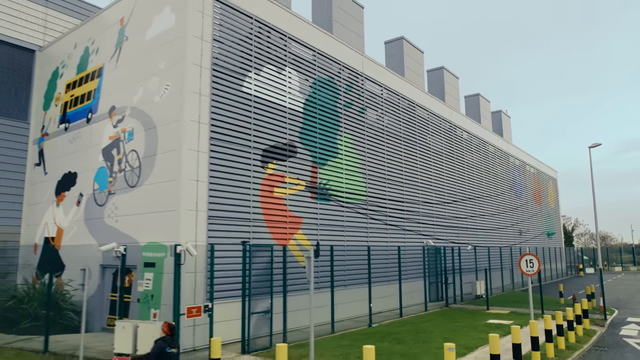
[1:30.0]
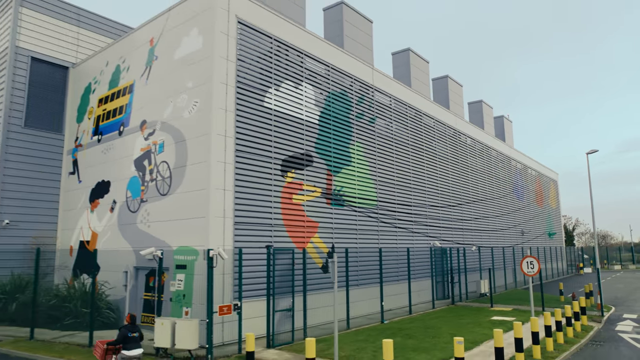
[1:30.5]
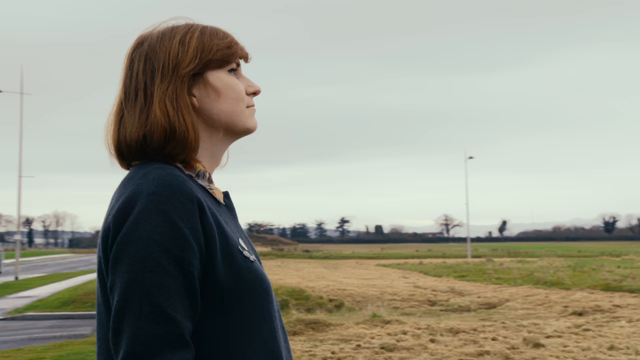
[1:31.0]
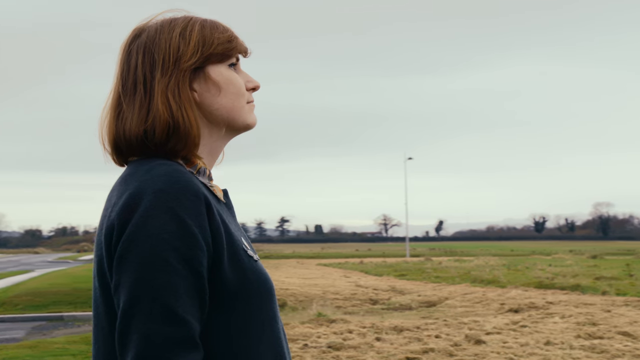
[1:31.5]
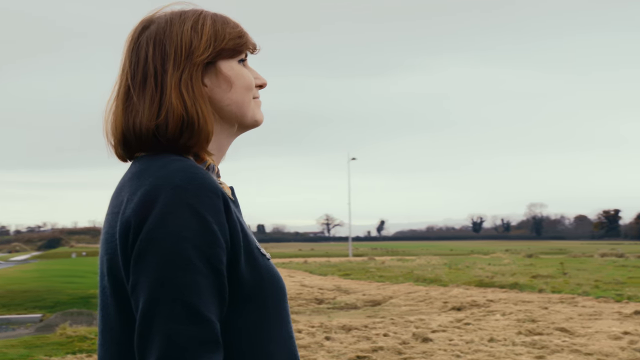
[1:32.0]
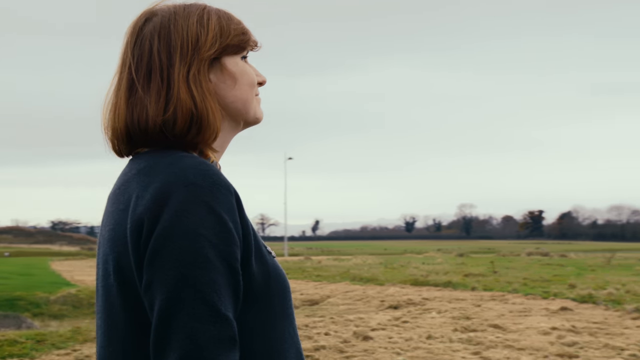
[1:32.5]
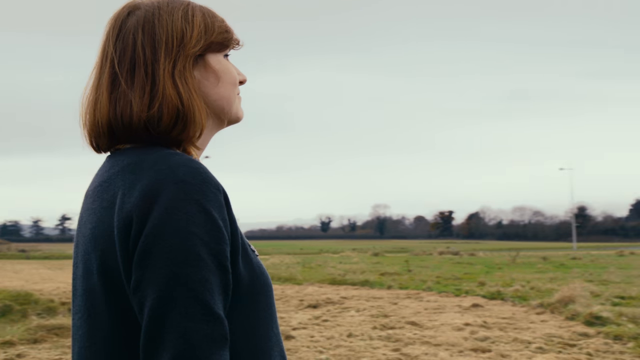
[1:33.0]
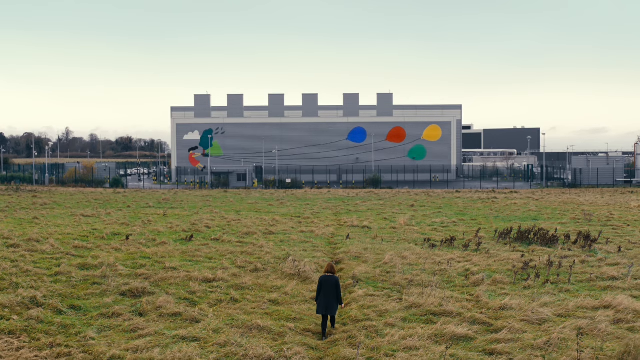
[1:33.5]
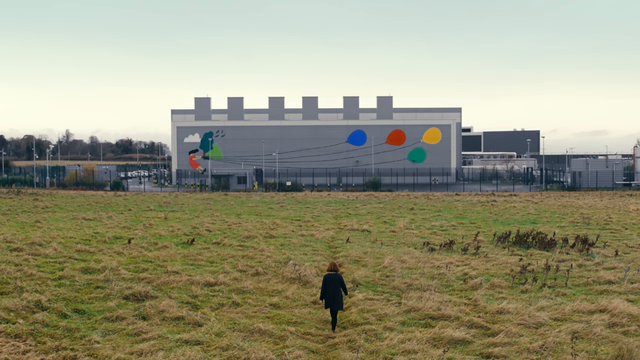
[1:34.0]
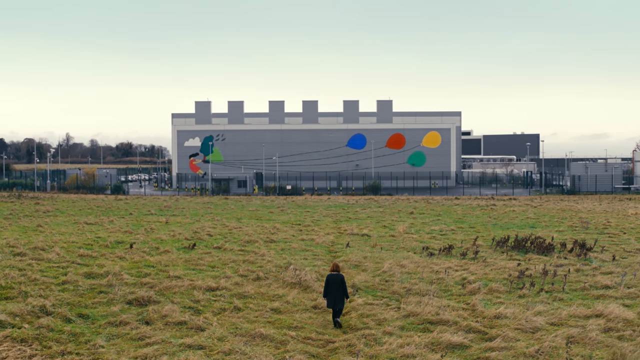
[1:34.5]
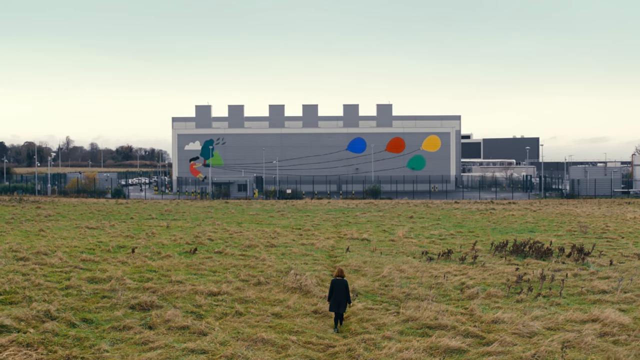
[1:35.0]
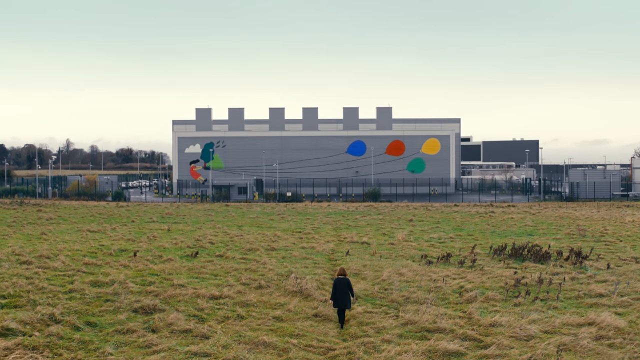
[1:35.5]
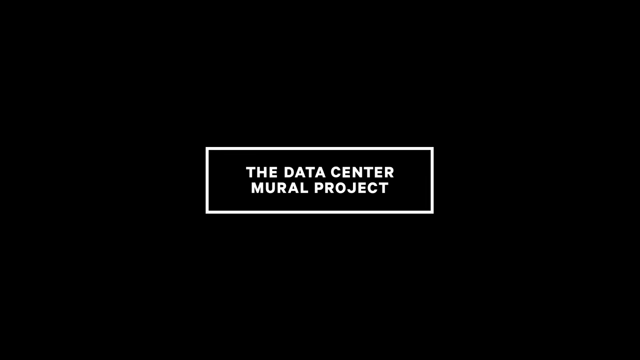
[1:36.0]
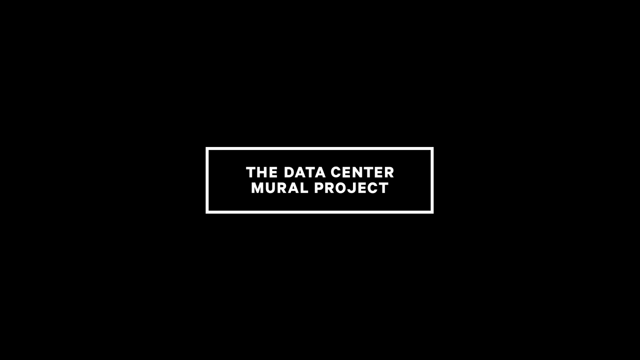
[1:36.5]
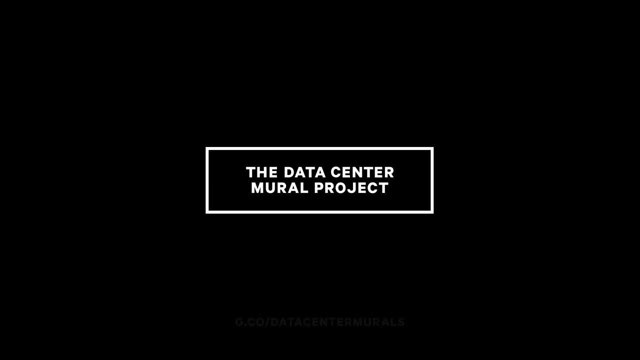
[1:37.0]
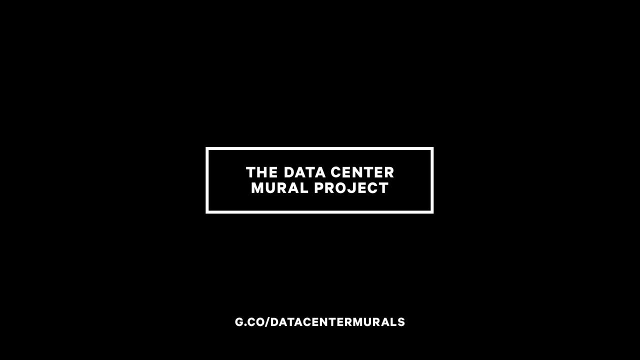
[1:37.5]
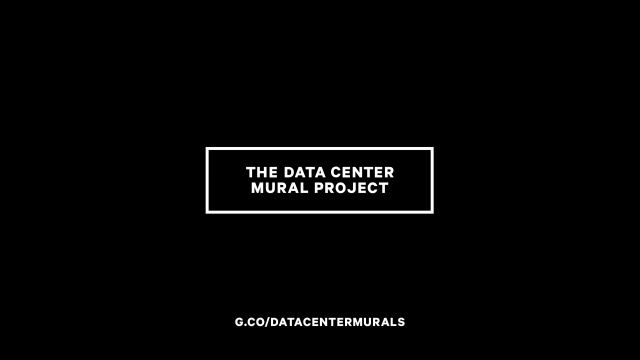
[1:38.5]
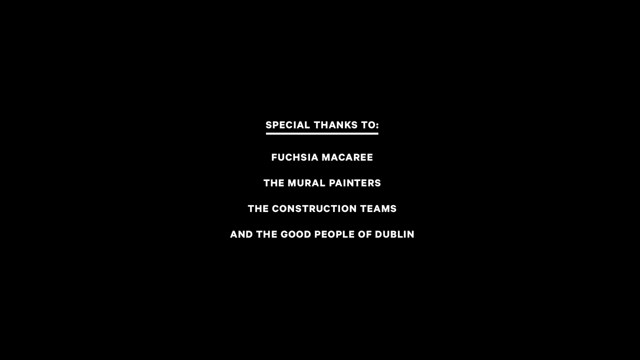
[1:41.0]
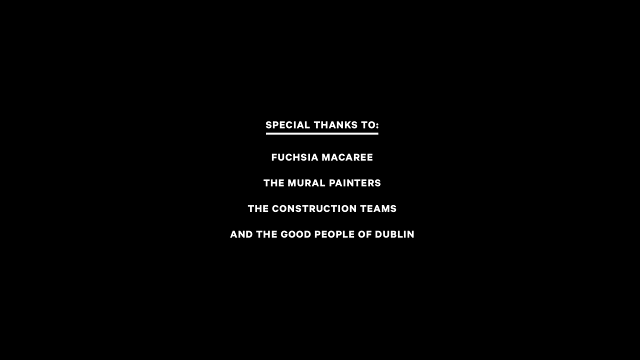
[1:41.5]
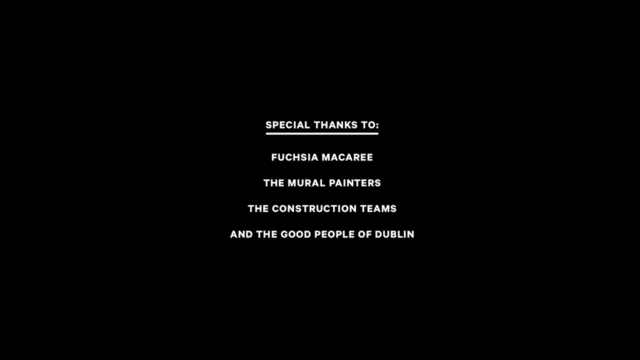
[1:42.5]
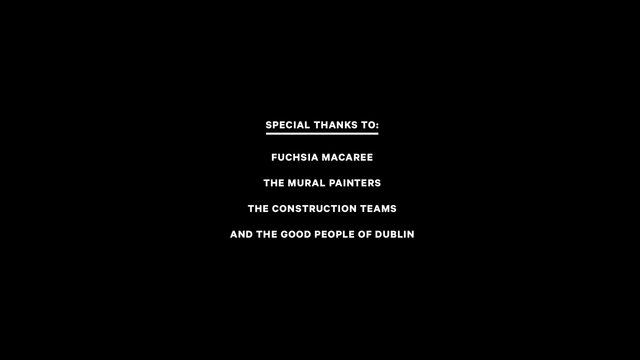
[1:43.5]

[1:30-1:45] Some of the artwork is shown, then Fuchsia is walking, shown from the top half up, looking off into the horizon. She then walks across the field outside, maybe about 20 to 30 feet from the building, walking toward it. The artwork, such as the balloons, is visible, and it looks like she is admiring it. As she walks, white text reading "the Data Center Mural Project" appears with a white rectangular border. On a black screen, text reads "a special thanks" followed by four names, and a website appears along the bottom where "the Data Center Mural Project" is written. The credits give special thanks to Fuchsia Macquarie, the city of Dublin, the mural painters and the construction teams, and a website reads "g.co\datacentralmurals".